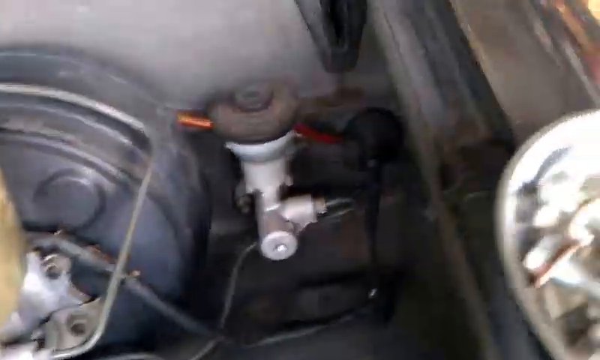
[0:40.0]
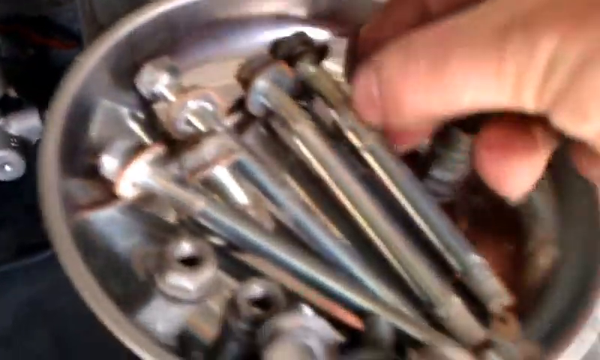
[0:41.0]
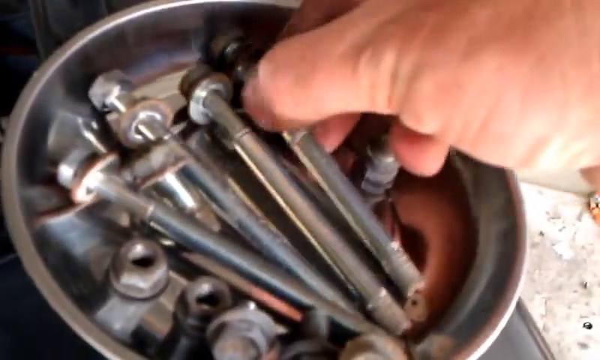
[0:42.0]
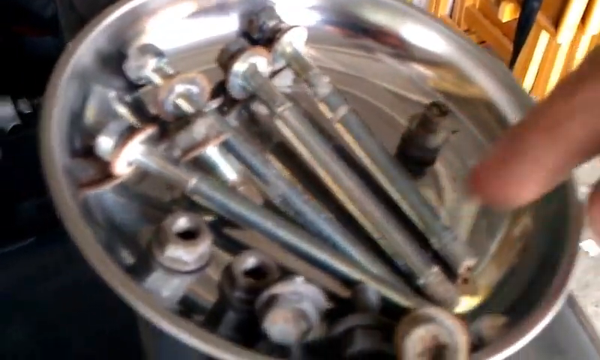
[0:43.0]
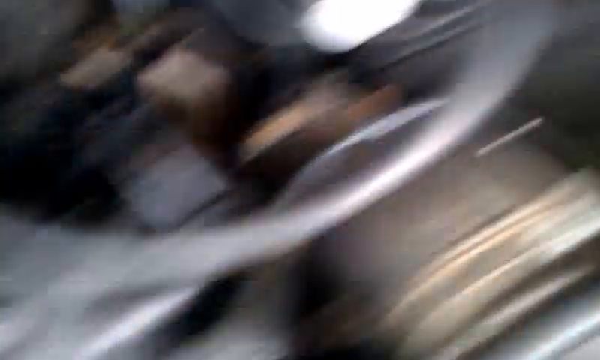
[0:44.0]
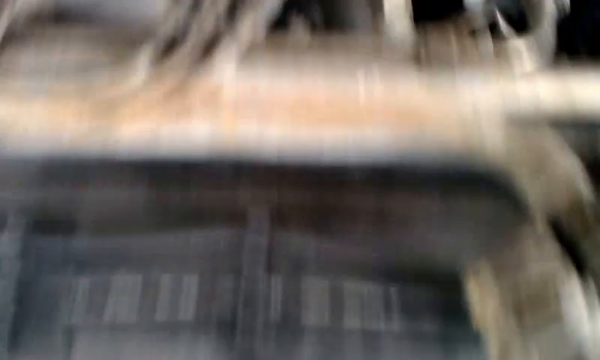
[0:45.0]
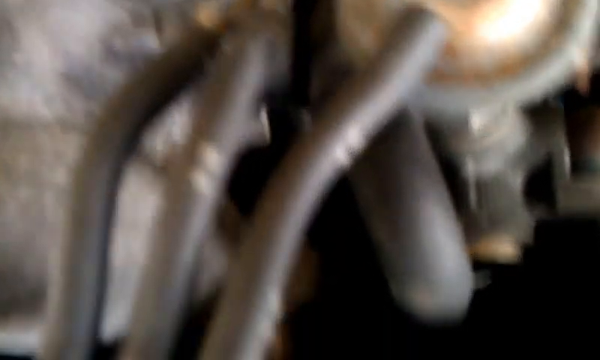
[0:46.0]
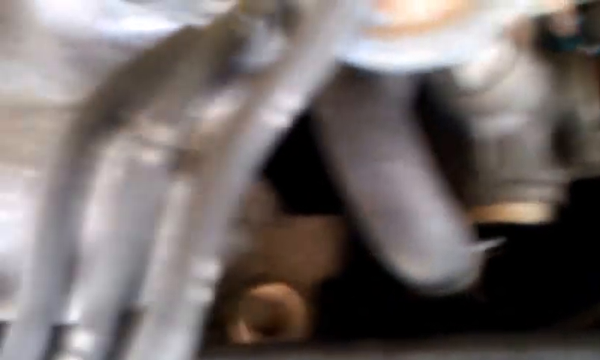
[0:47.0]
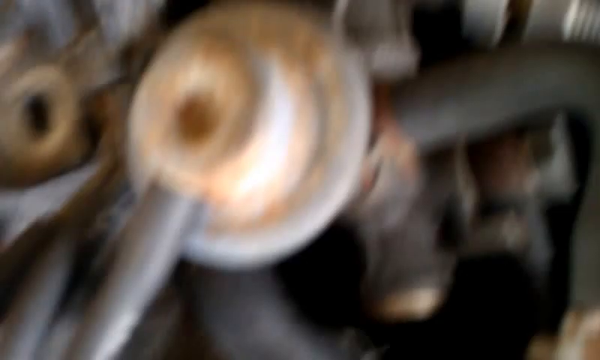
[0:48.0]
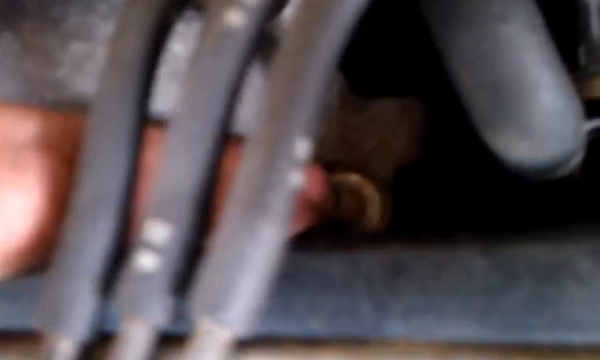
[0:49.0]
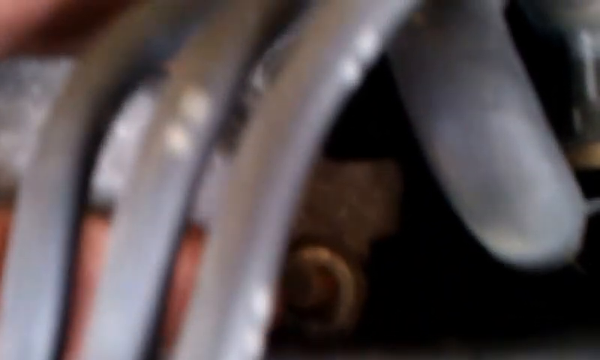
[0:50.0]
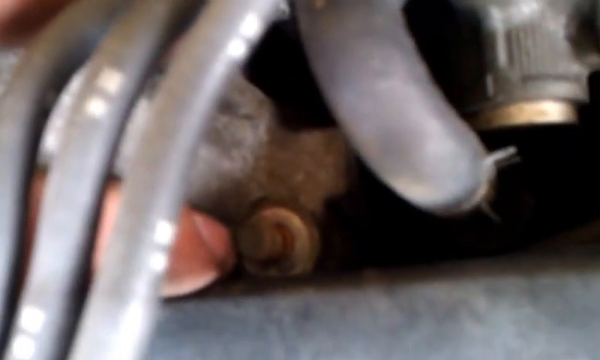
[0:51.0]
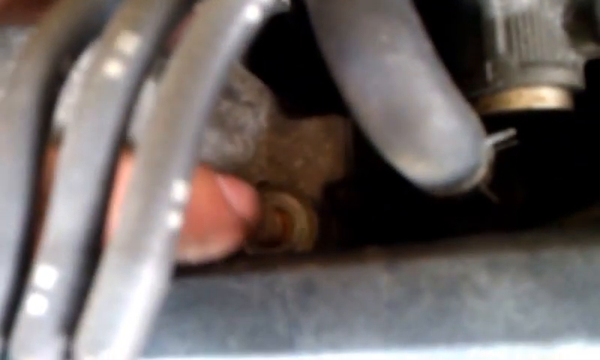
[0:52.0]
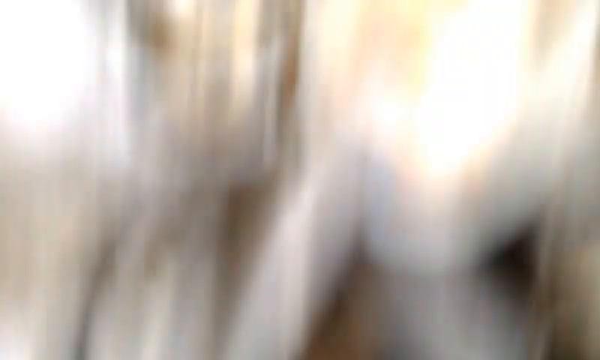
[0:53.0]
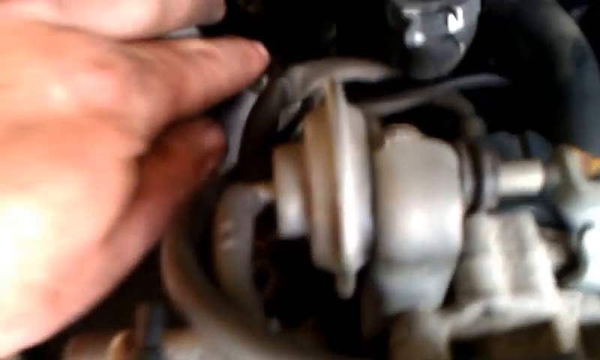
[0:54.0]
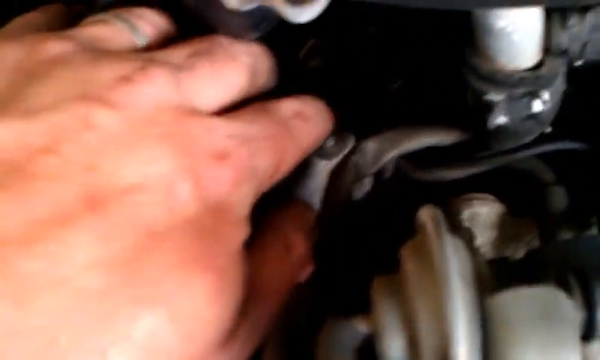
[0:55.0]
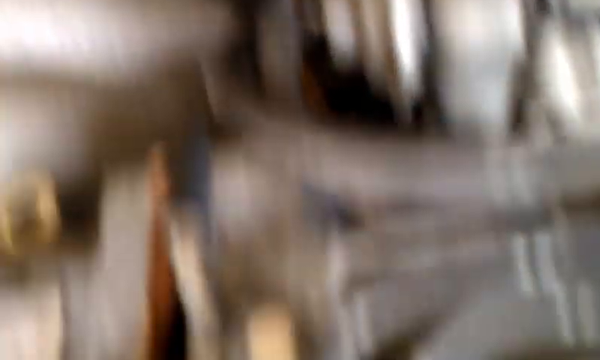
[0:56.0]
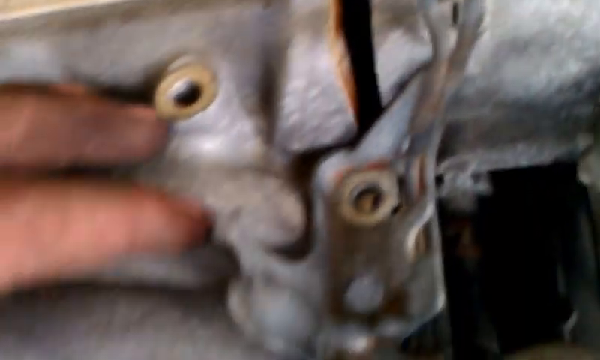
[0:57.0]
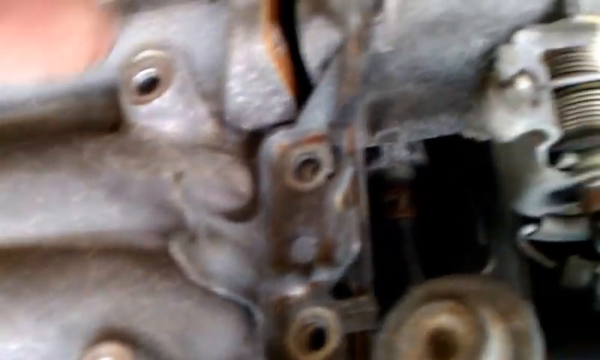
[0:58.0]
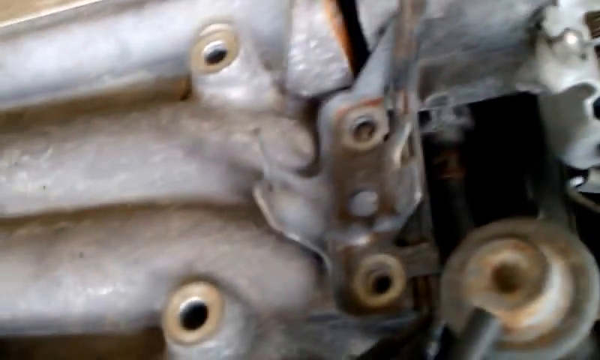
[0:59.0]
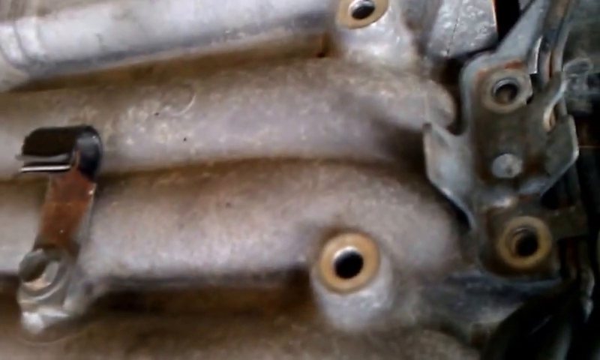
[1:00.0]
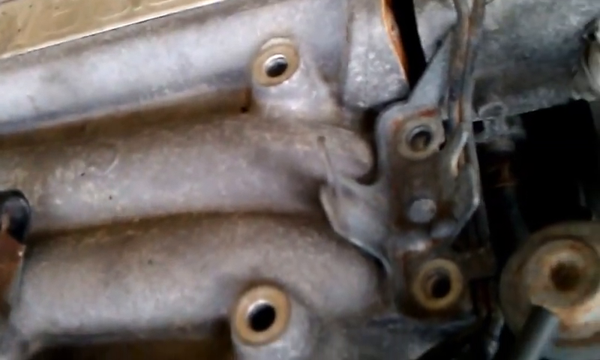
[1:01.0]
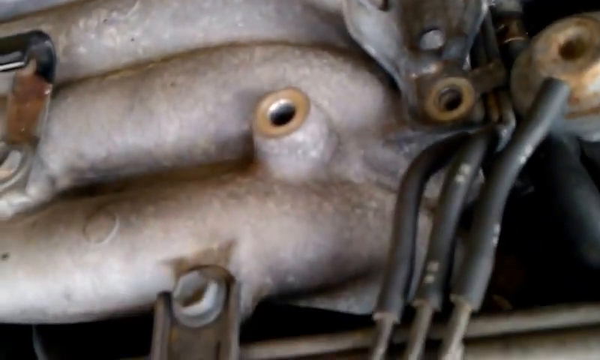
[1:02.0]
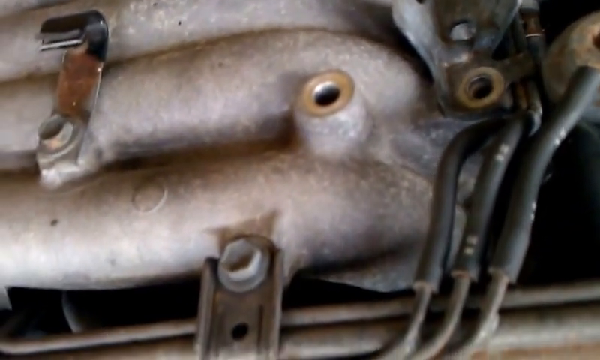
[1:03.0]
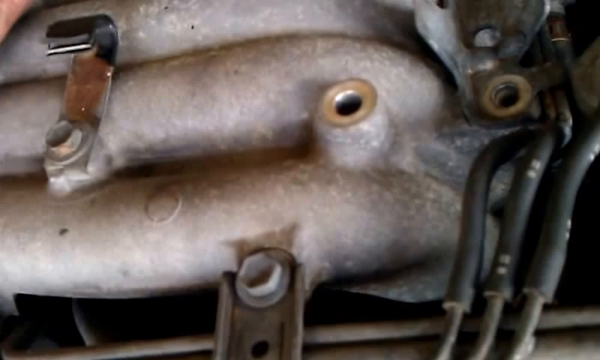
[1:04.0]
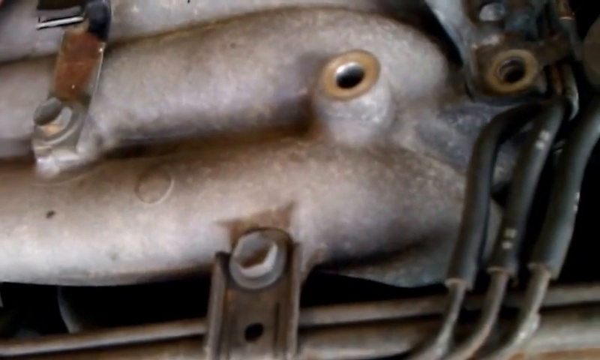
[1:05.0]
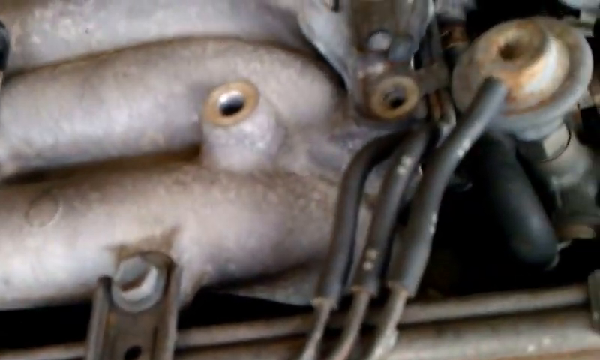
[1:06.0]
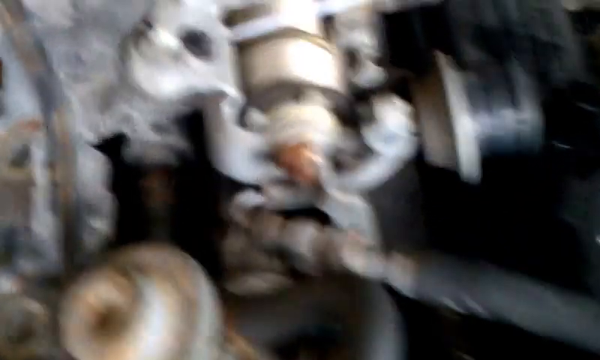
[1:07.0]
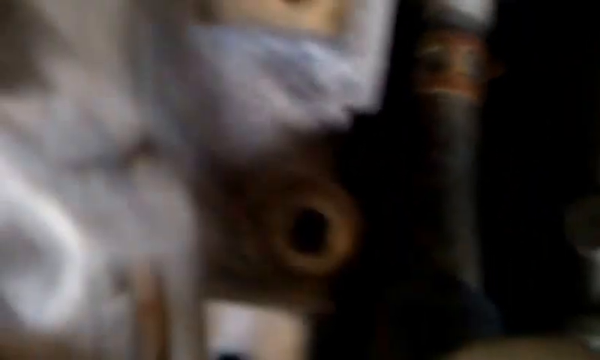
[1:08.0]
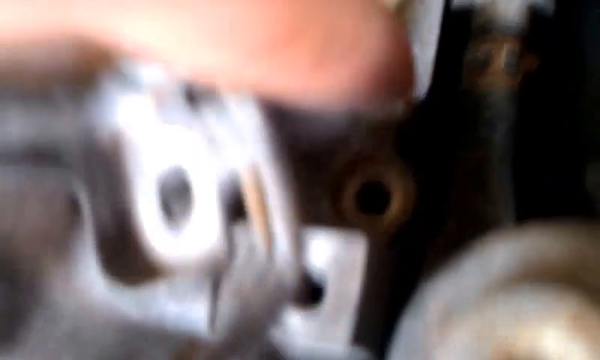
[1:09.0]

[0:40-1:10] The camera keeps panning right until it is just over the top of the fender on the driver's side. There is a circular metal pan that looks chrome. Four really long screws, probably five inches, and the nuts that go on them are lying in the pan, which rests on the edge of the front driver's-side fender. The camera pans back over and goes in close, looking down past three hoses, with a big one underneath and more metal below. Fingers come in from the left, pointing down under the three hoses at a screw whose end pokes up; it has a washer around it but no nut. The finger is put on it and moves it, and it moves up and down. The camera comes out and goes up toward the top of the engine, with half of the back of the hand on screen, the thumb going down and the back of the pointer finger visible as it reaches down to point at another piece. It backs out, looking around at a bunch of empty spaces where bolts used to be, now with no bolts in them. The camera kind of zooms in, showing two more spaces, kind of underneath the engine on the side, where there used to be bolts.